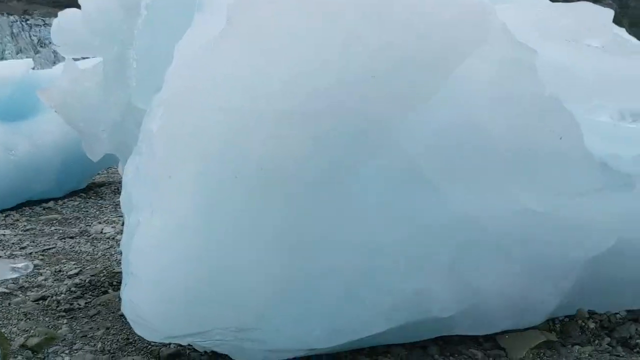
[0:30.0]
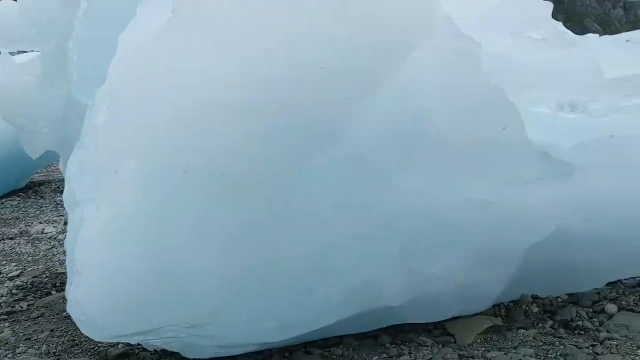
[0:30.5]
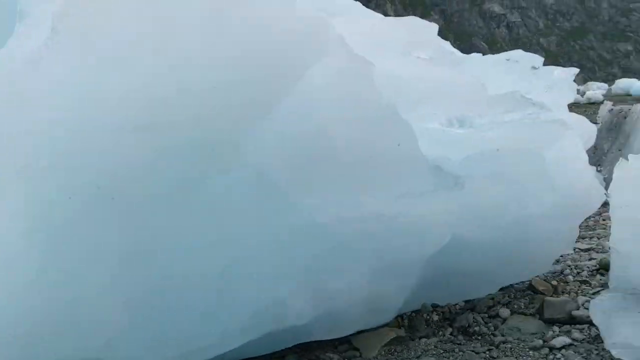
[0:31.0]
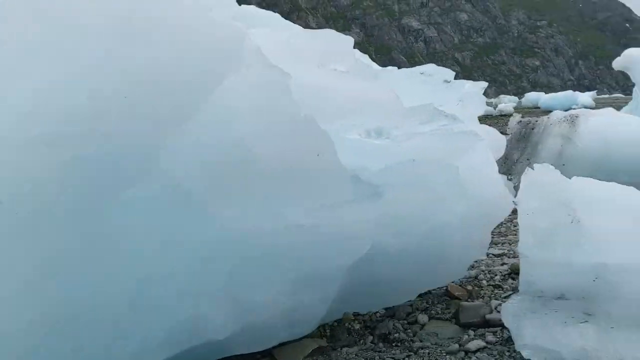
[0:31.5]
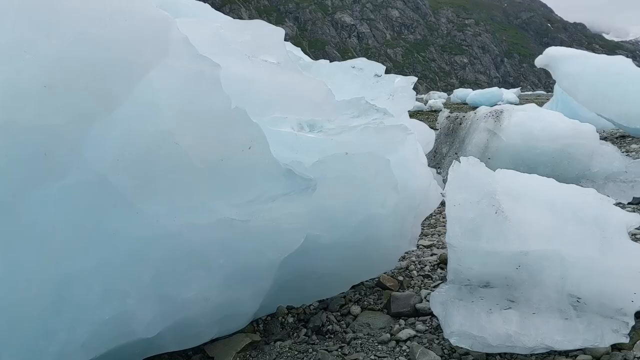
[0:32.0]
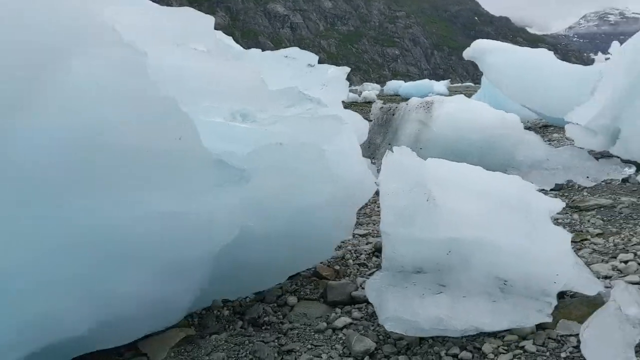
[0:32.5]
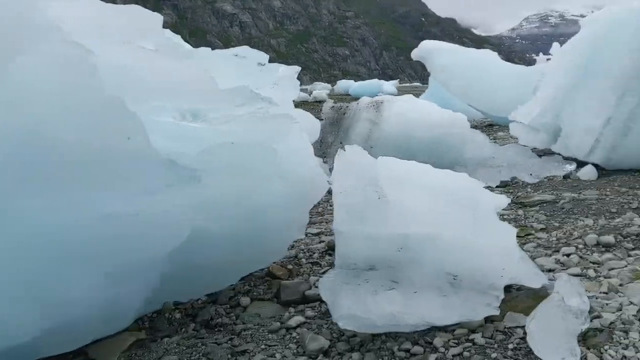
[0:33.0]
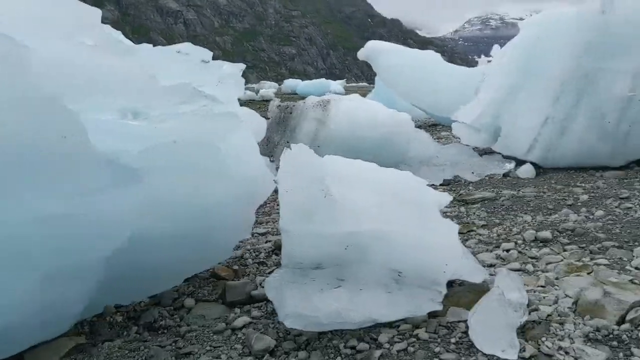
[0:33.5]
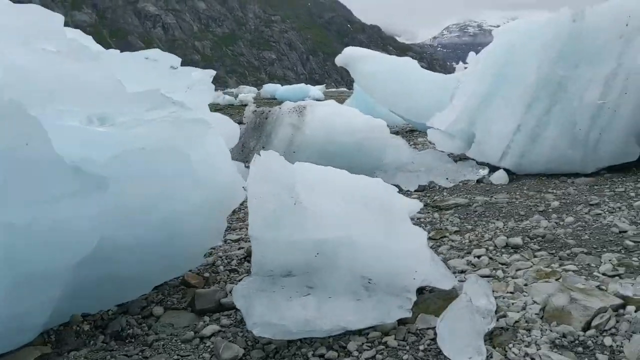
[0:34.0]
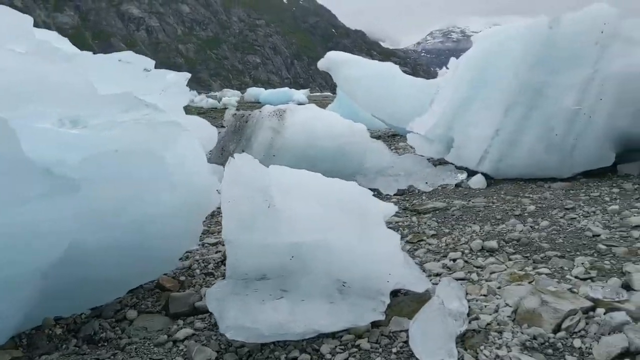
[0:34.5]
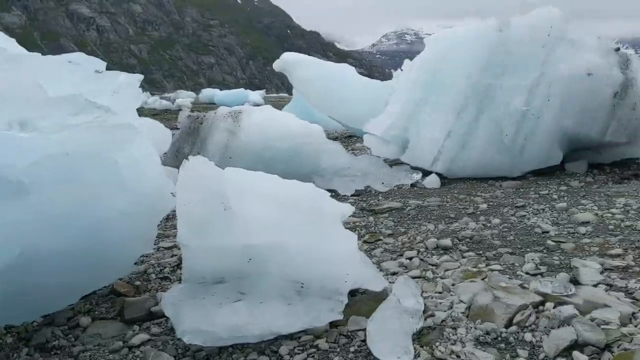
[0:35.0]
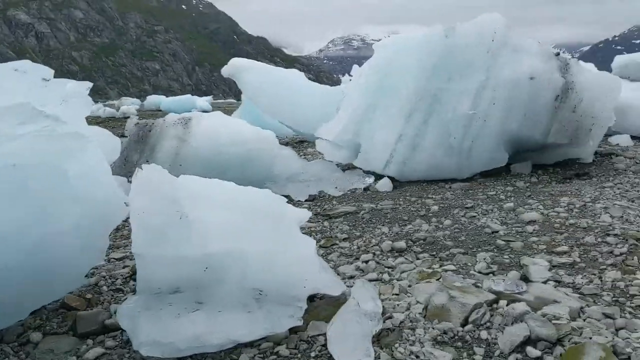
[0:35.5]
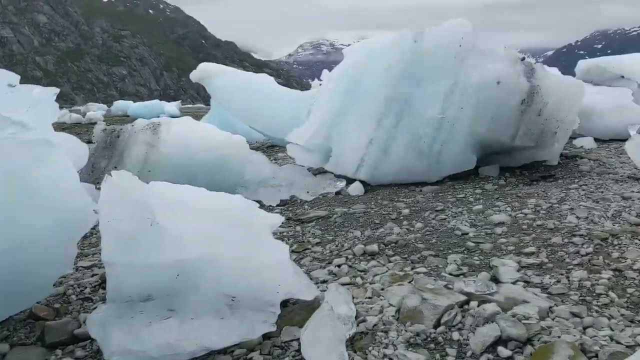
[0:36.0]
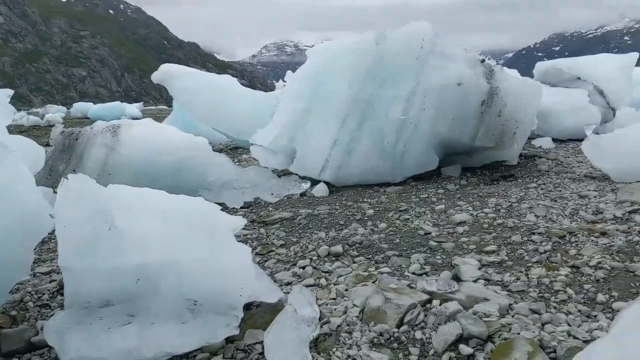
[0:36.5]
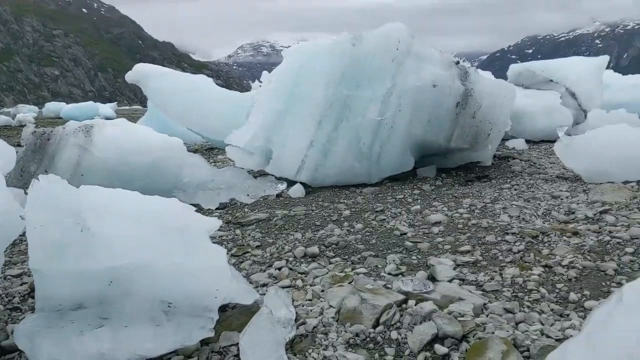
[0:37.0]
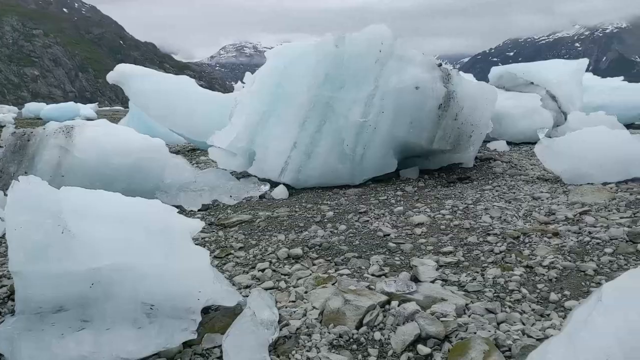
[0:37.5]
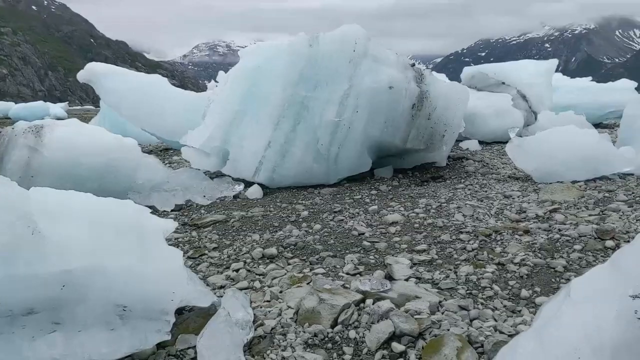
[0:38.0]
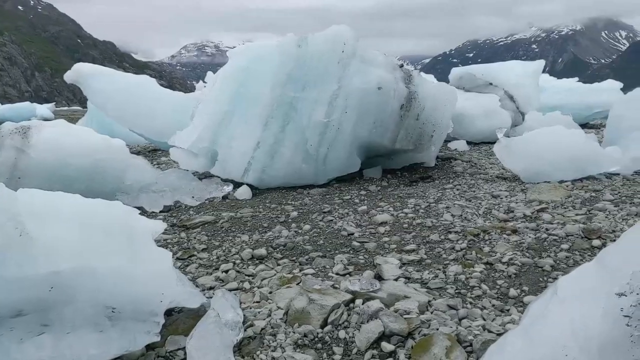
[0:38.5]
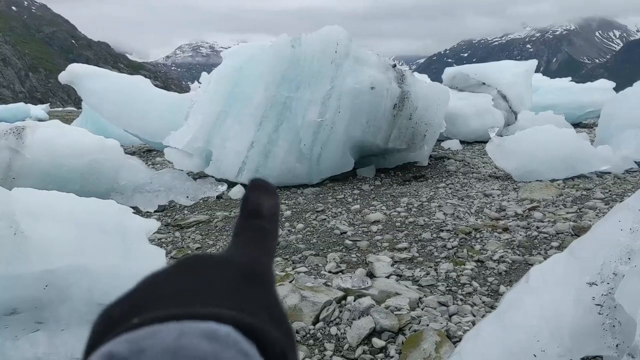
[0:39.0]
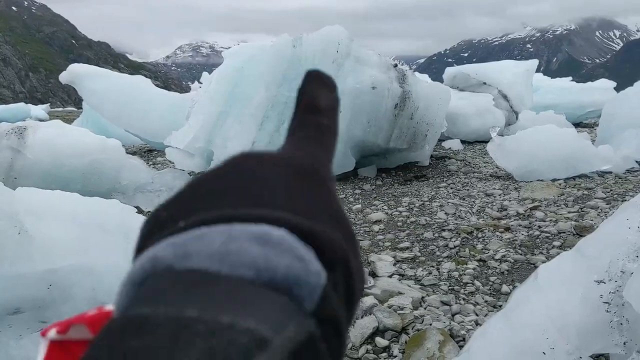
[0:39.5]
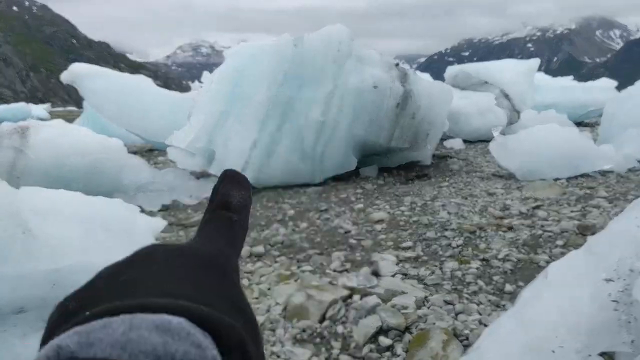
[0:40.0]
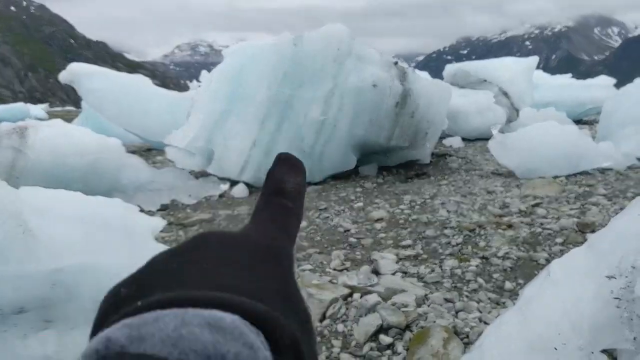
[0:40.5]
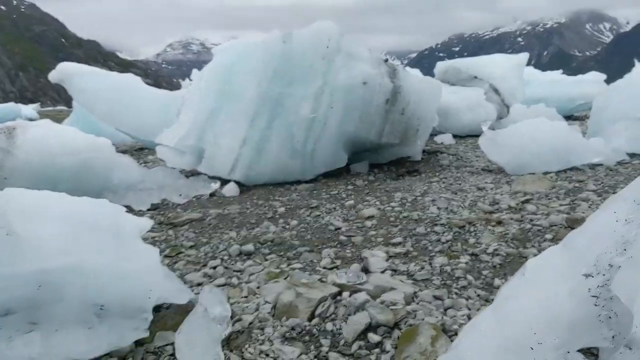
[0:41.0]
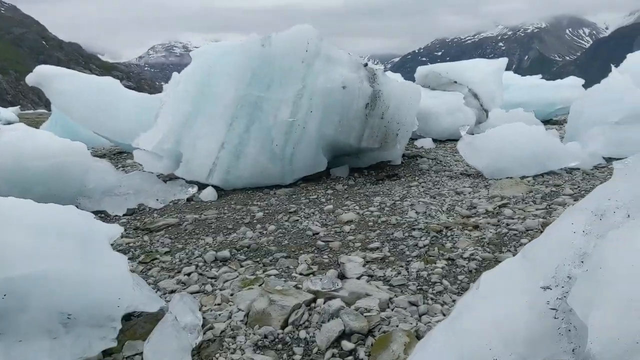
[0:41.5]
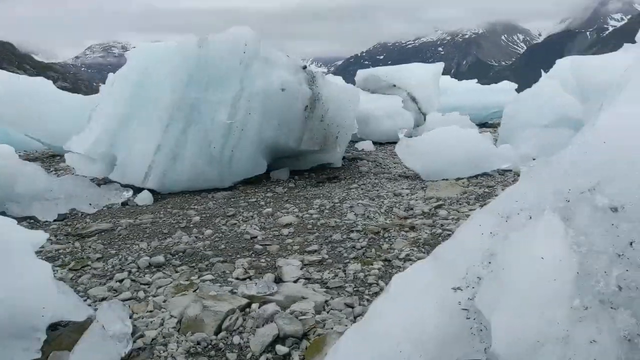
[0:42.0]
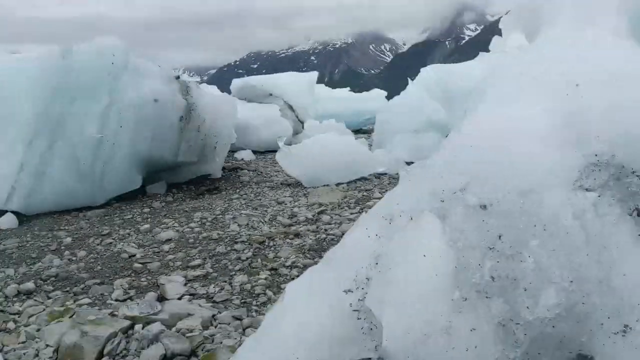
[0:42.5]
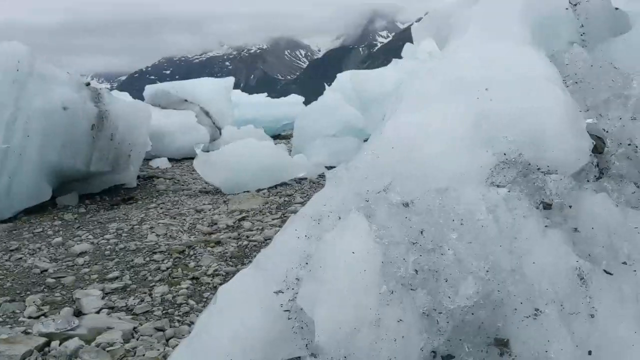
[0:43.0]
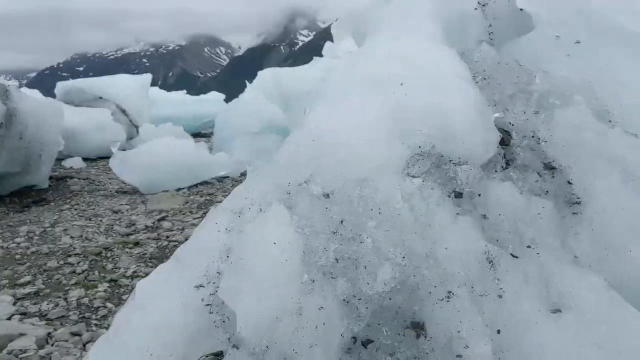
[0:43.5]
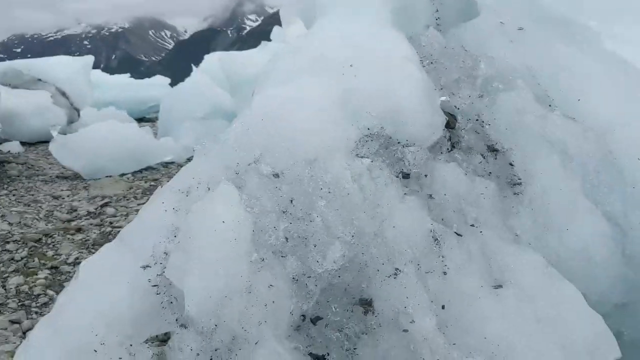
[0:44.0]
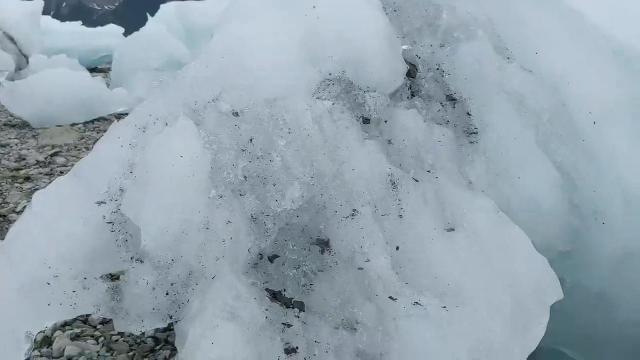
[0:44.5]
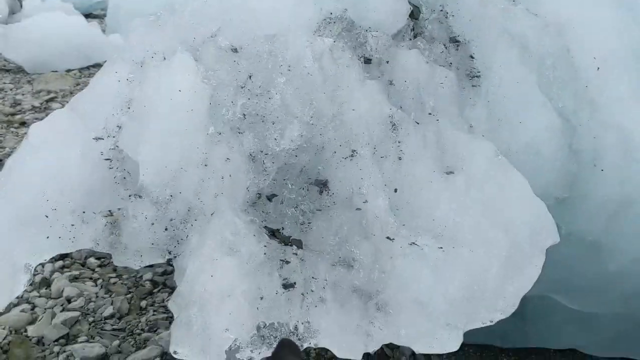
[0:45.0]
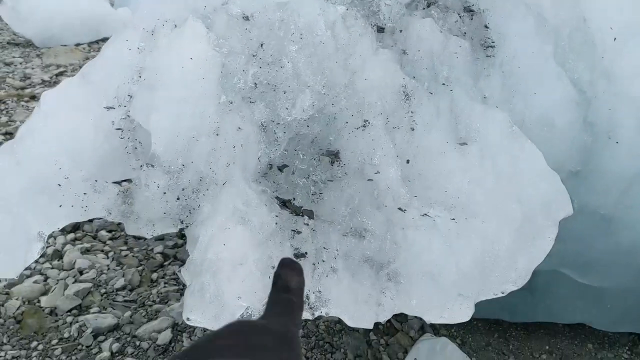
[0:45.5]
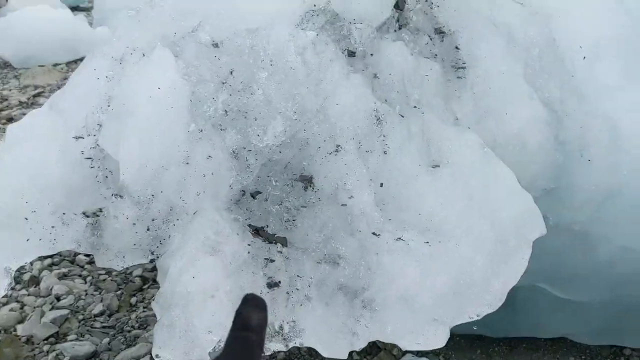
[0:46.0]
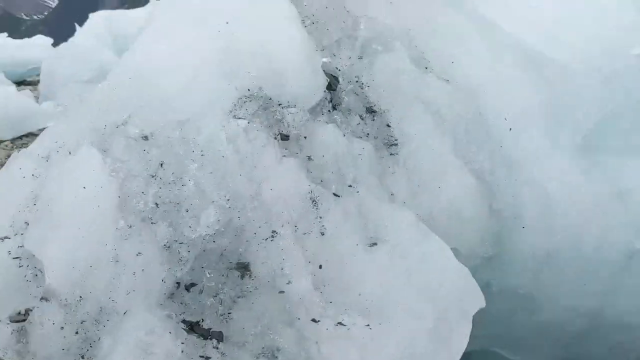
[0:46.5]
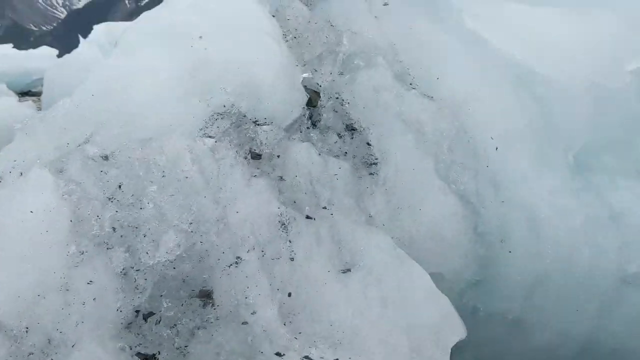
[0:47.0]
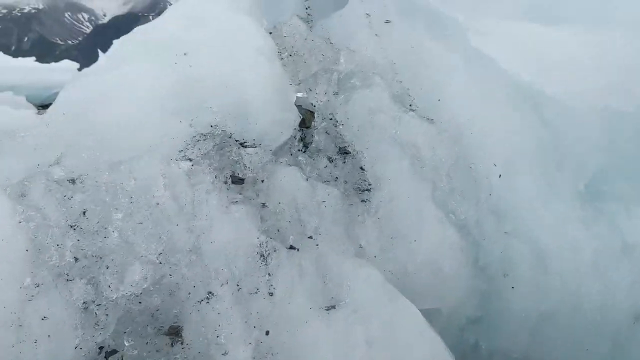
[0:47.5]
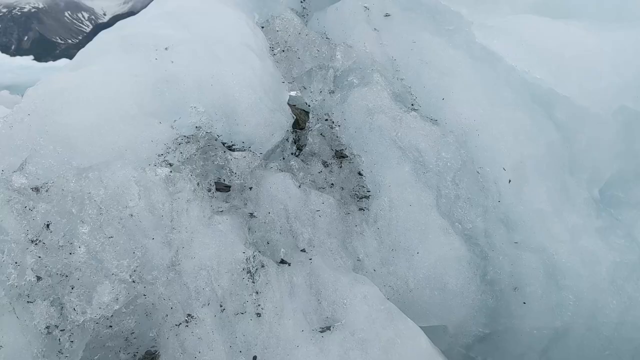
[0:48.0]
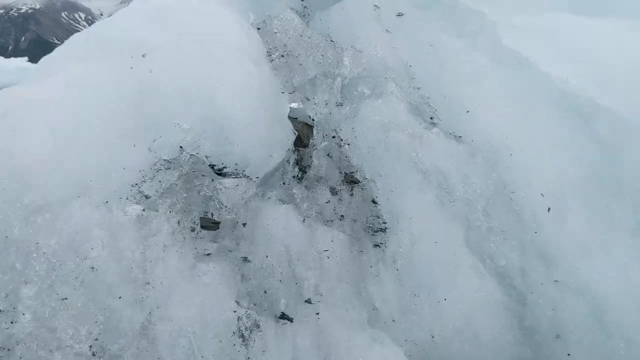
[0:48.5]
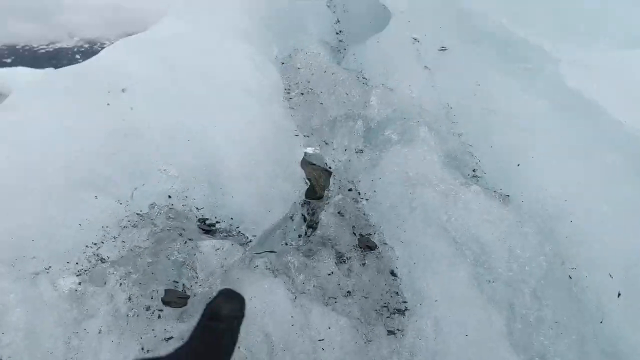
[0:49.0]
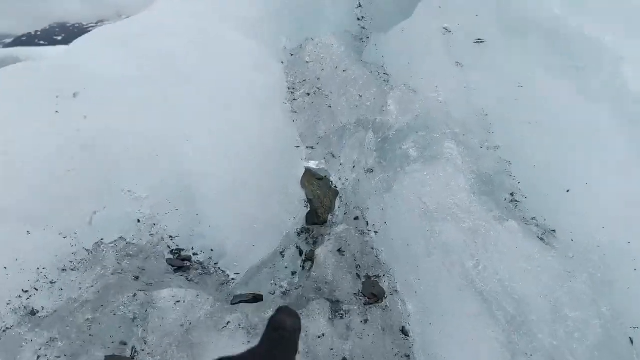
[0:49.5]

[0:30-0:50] The camera keeps panning to the right, showing a big jagged block of blue-white ice in the foreground and the mountains in the background. The view moves onto a somewhat flatter plain covered in jagged blocks of ice and loose light grey stones and gravel. A hand appears, a finger pointing at a block of ice, and the camera zooms in somewhat on a rough block of ice full of little bits of gravel. In the background are bleak, tall, dark mountains with snow on top, with overcast grey cloud covering their tops. The lighting is uniformly overcast and grey, and the scene looks cold and bleak.